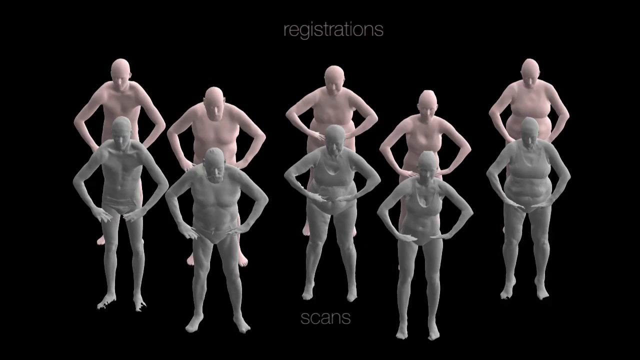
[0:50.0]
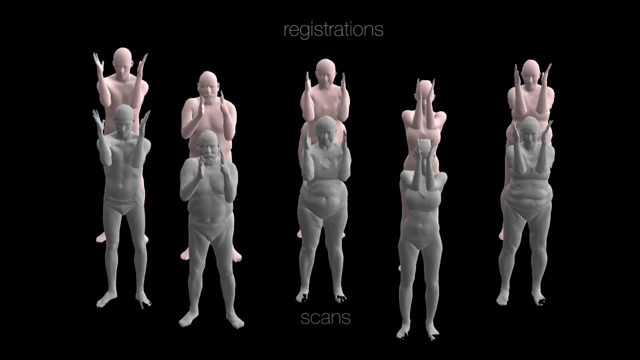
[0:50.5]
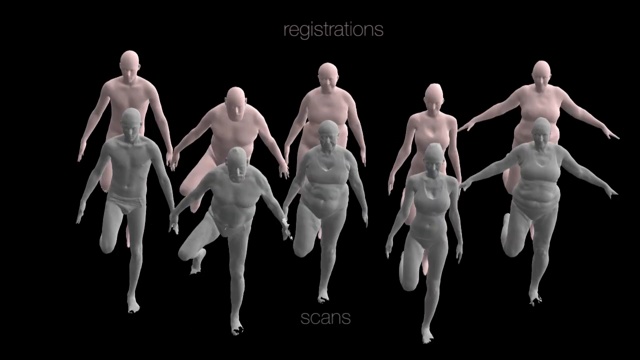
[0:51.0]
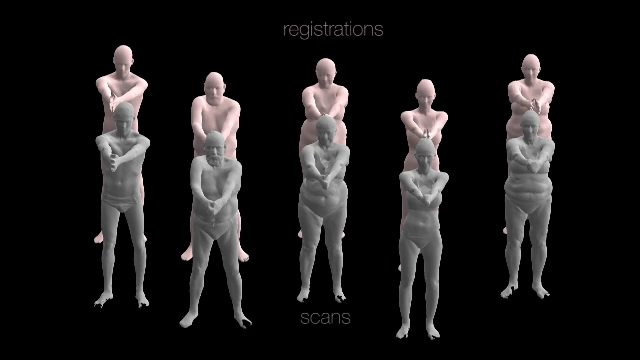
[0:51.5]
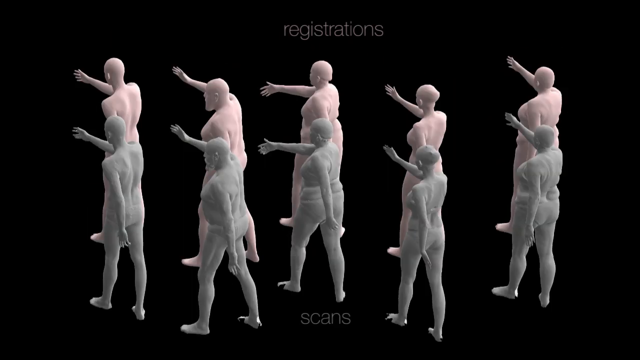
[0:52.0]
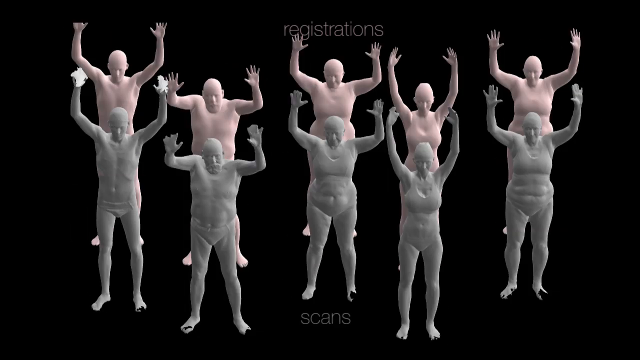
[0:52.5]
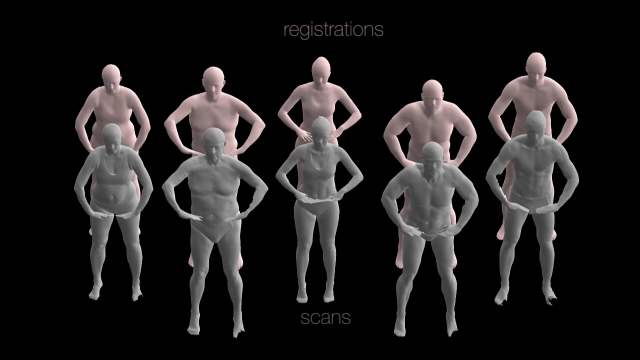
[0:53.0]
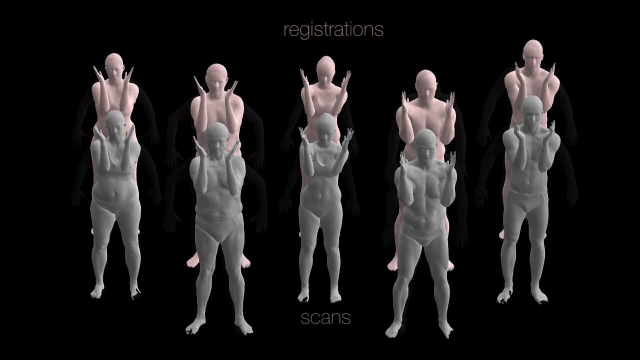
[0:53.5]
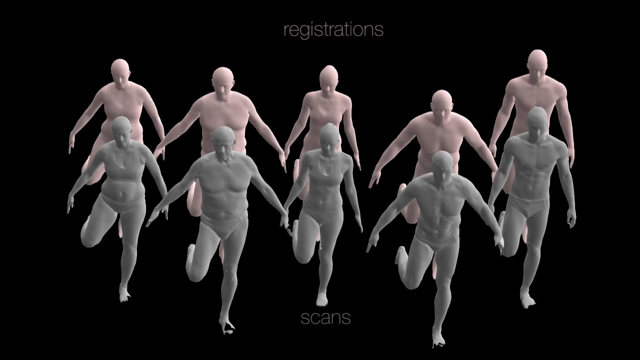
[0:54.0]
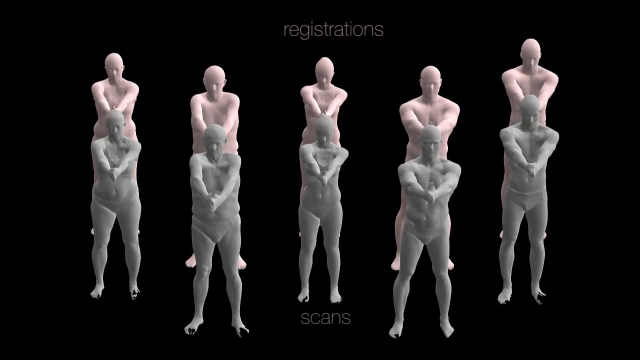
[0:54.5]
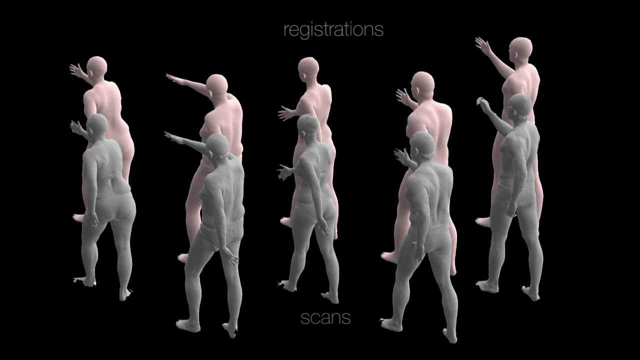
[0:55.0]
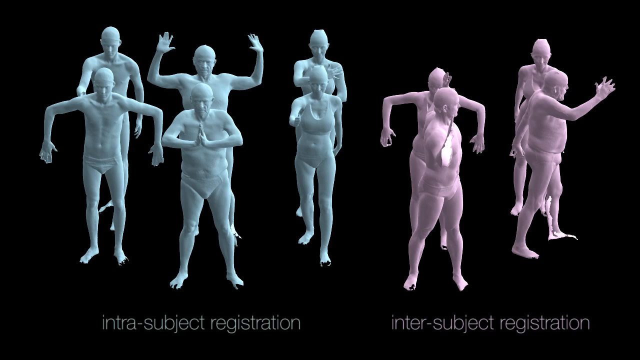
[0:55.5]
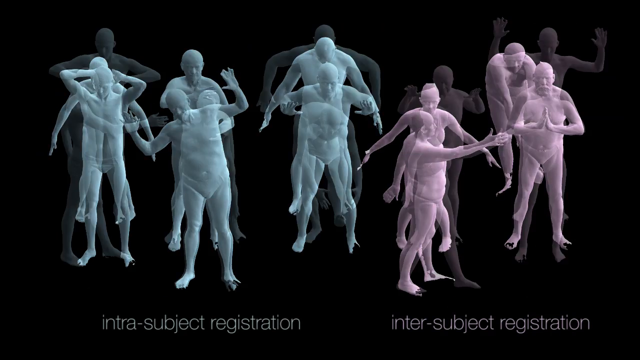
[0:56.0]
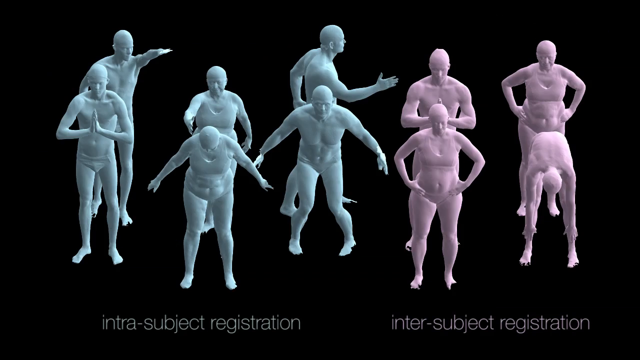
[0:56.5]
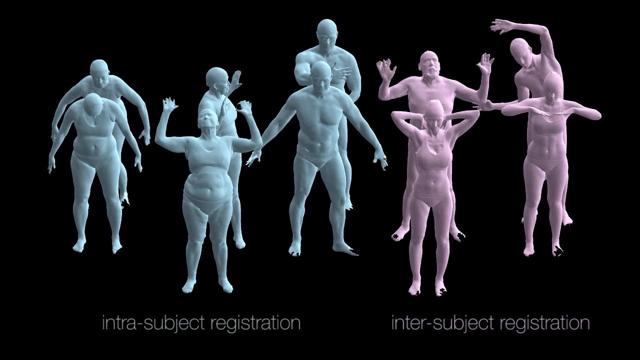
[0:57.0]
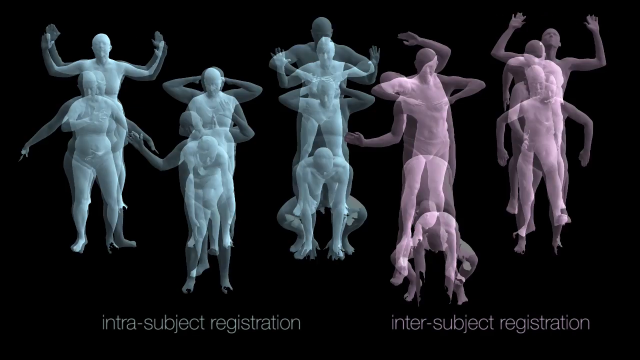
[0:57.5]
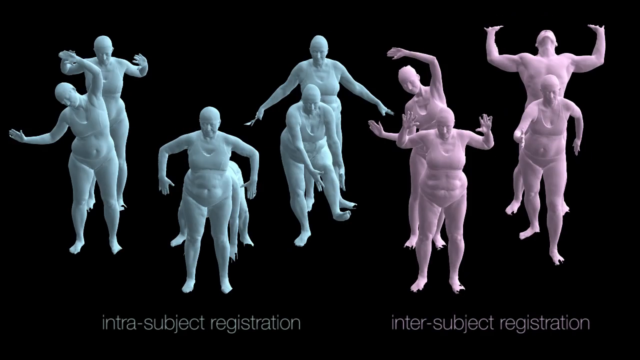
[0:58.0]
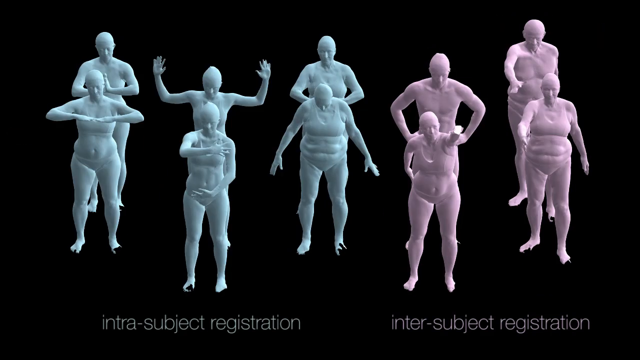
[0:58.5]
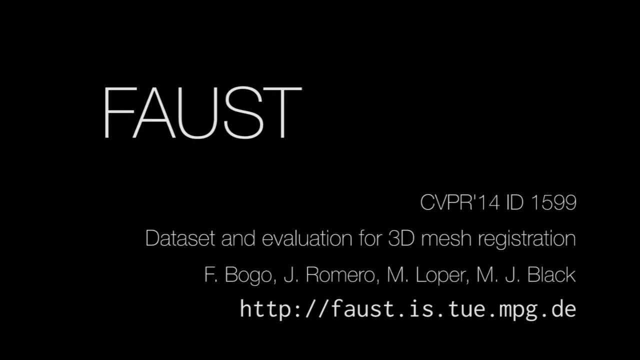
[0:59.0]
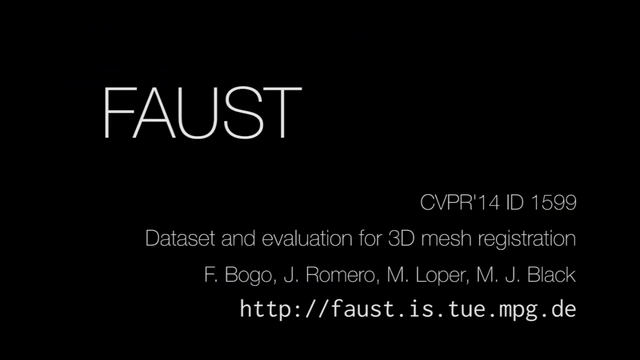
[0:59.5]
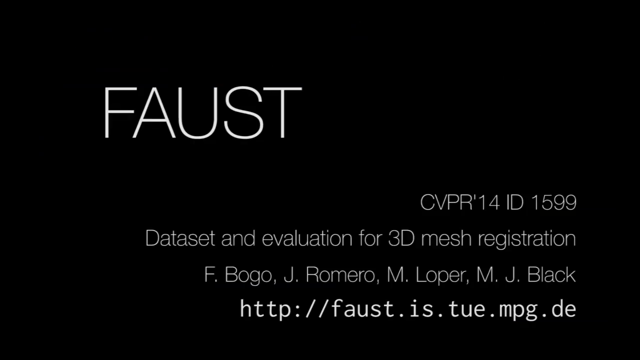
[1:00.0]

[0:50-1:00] Different individuals do different exercises with differently coloured bodies: purple, a body that seems to be blue, and what seem to be gradient colours, then some greenish. There is a zoom in on both hands showing the real nose and the body types, which have blue imaginary lines. The person is separated into two, blue and pink. A skin in blue is shown, known as the image error, and the body spots are shown on top. People who seem to be females do different exercises, separated into "intra subject registration" and another group. On a black background, people are shown with different headings such as "textured registration", where the man is shown in three parts with coloured spots on his body, wearing blue underpants, with light blue lightning. They dance, doing similar sequences, and are separated into blue and pink. Toward the end of the video, white writing appears on a black background.